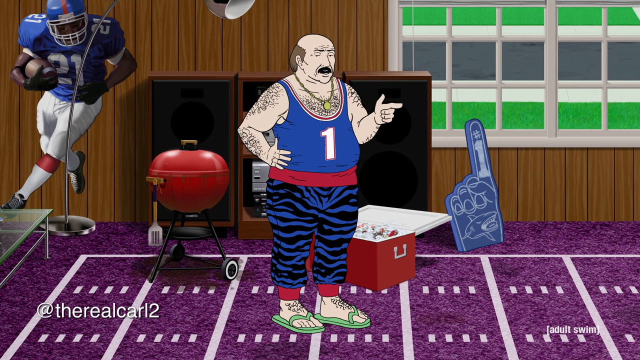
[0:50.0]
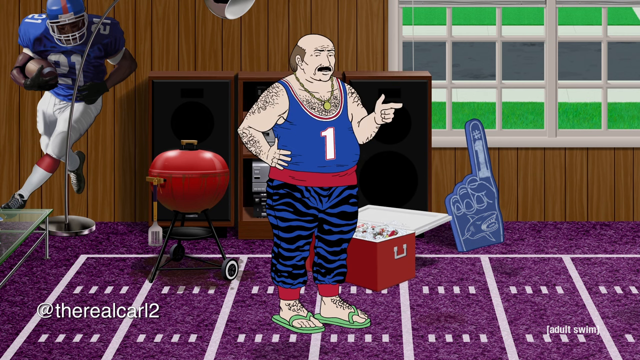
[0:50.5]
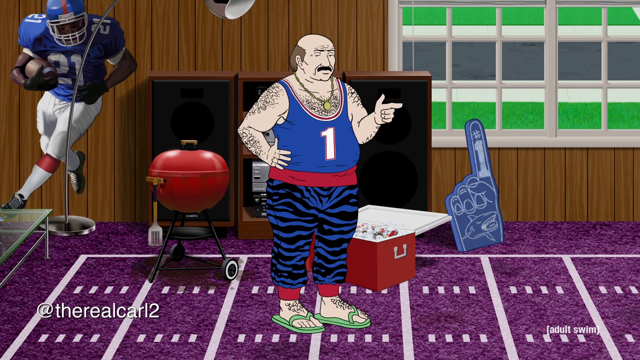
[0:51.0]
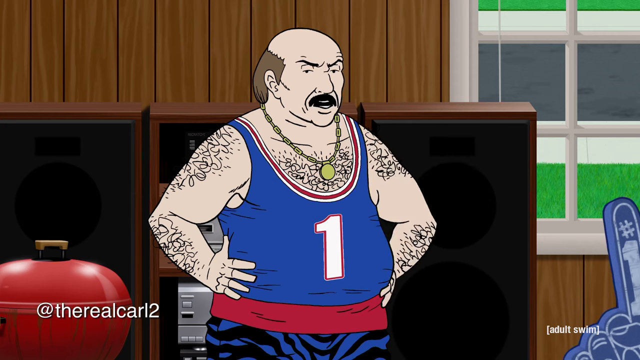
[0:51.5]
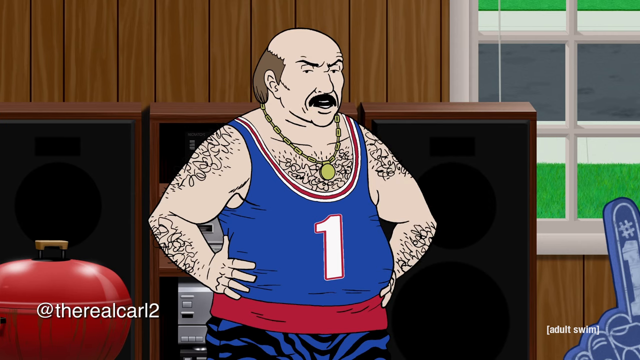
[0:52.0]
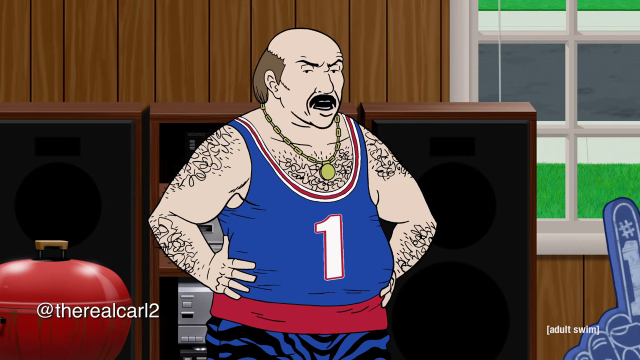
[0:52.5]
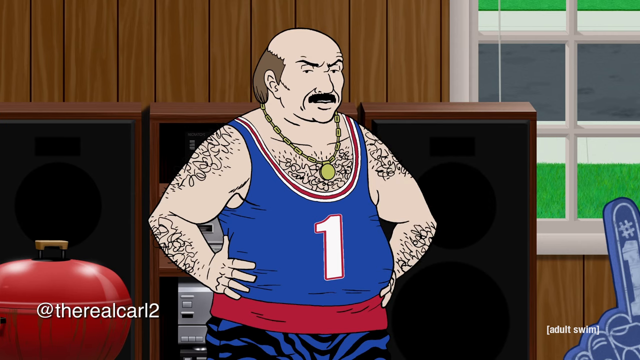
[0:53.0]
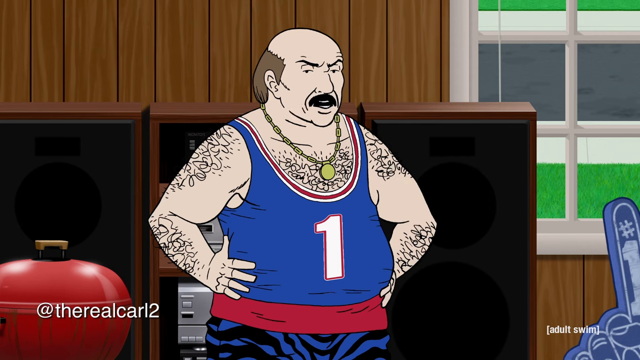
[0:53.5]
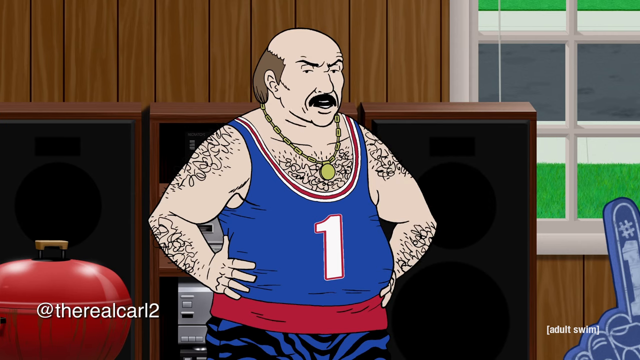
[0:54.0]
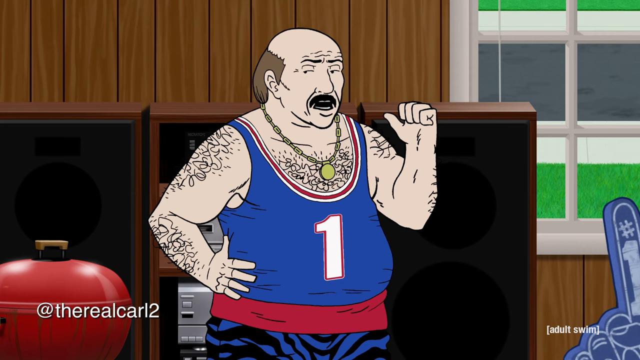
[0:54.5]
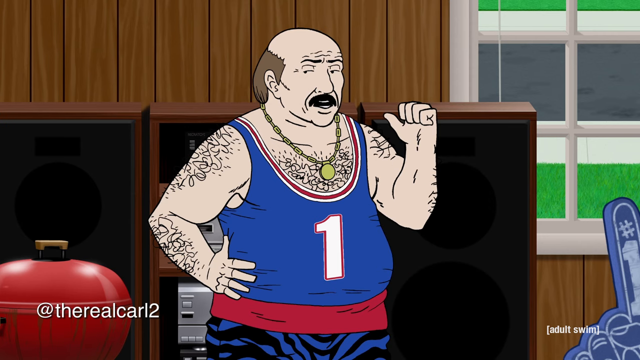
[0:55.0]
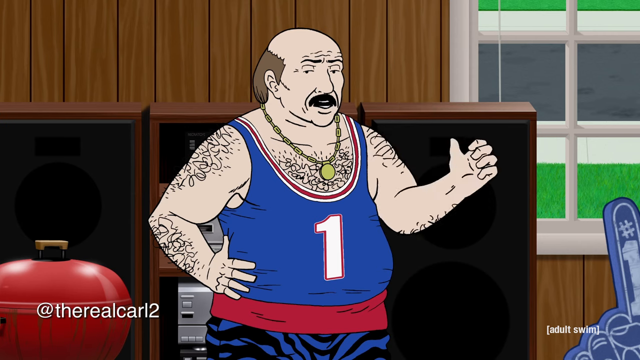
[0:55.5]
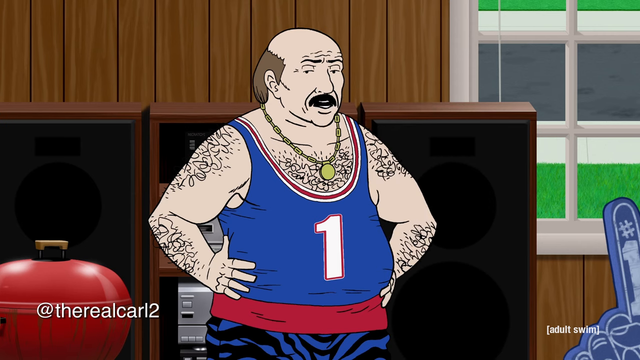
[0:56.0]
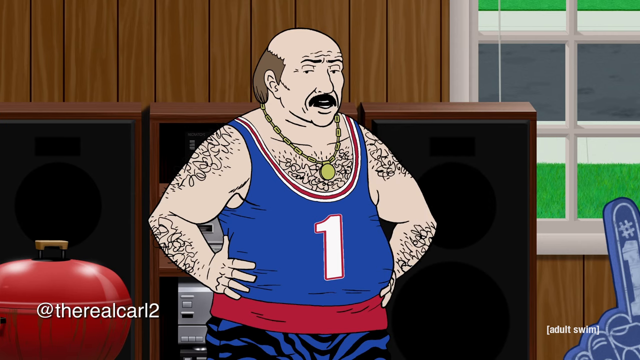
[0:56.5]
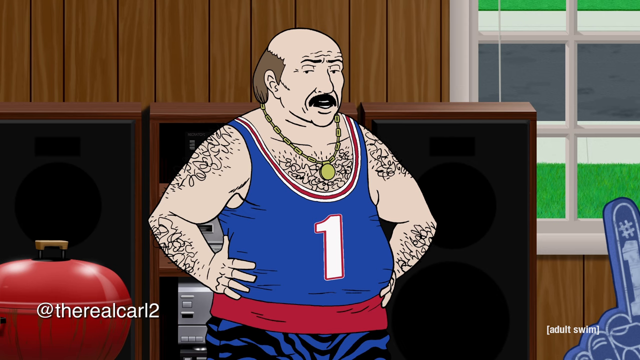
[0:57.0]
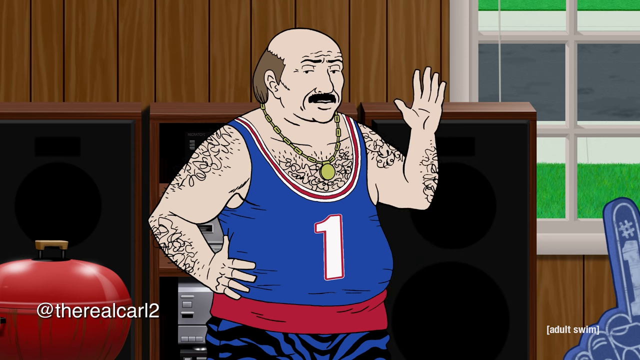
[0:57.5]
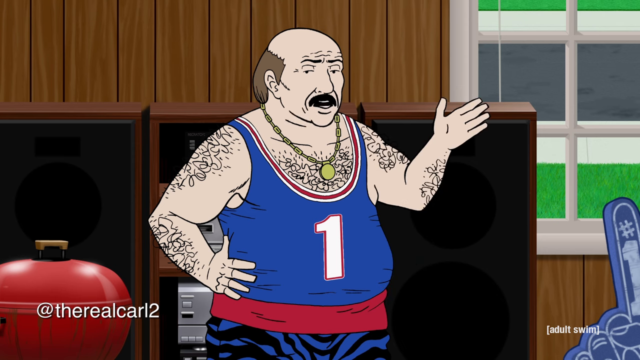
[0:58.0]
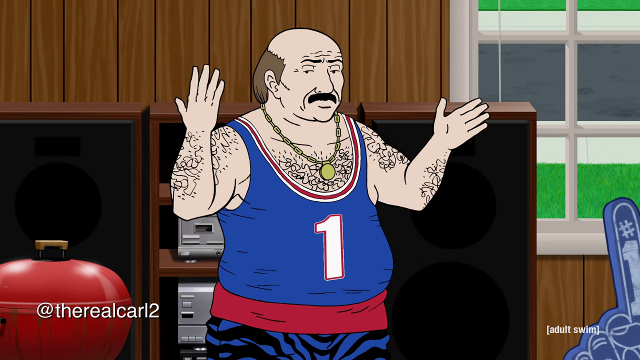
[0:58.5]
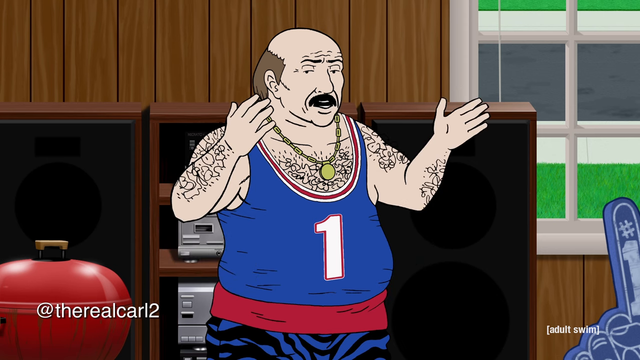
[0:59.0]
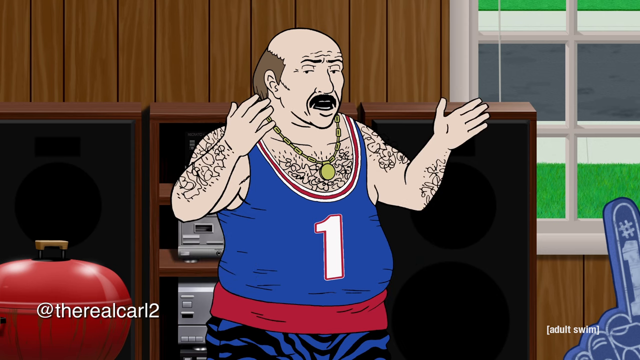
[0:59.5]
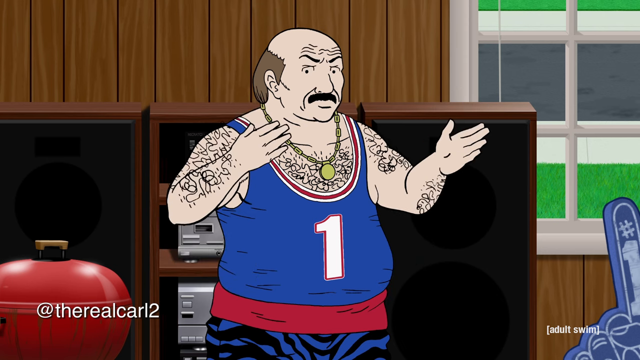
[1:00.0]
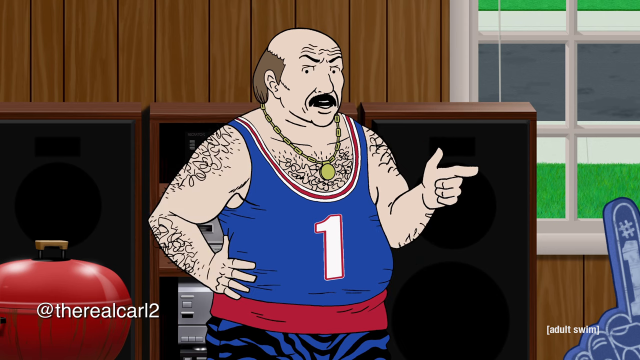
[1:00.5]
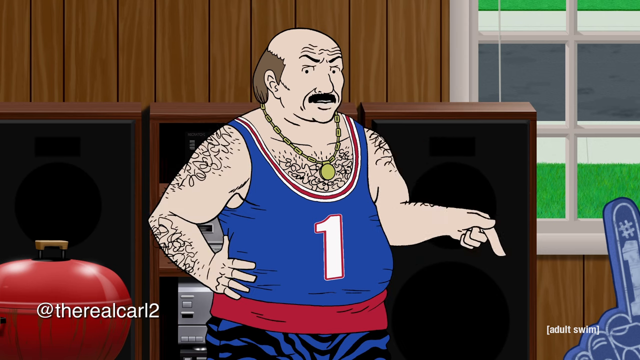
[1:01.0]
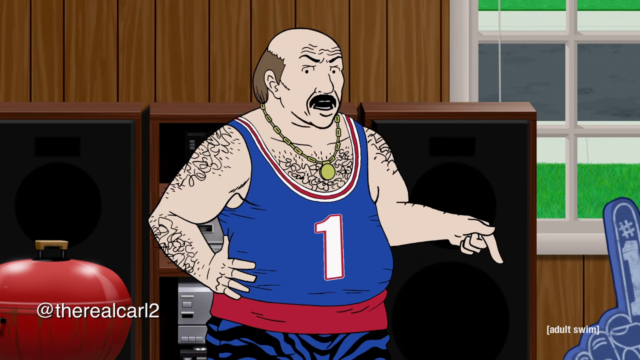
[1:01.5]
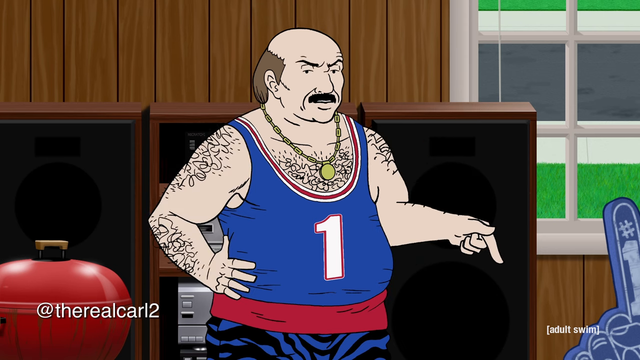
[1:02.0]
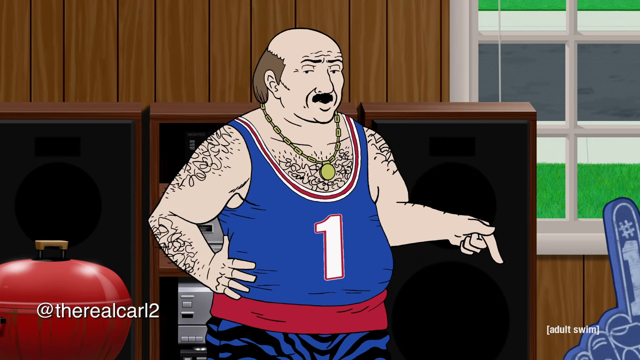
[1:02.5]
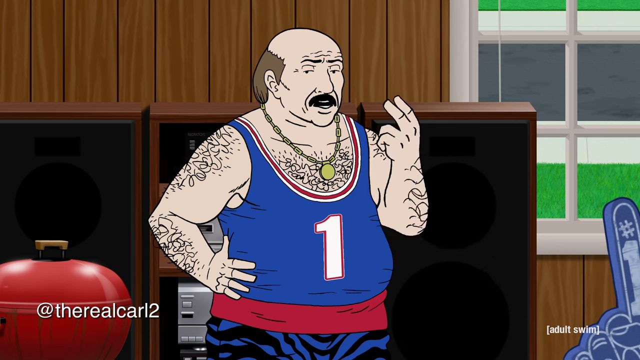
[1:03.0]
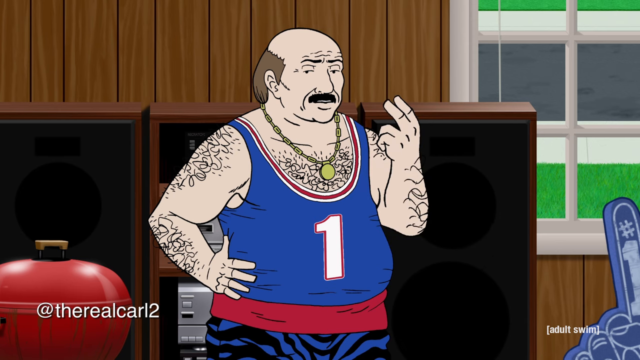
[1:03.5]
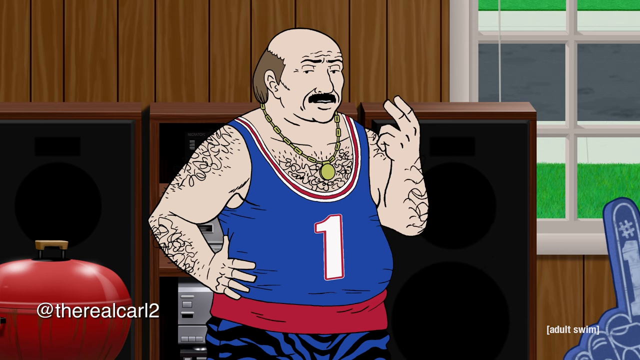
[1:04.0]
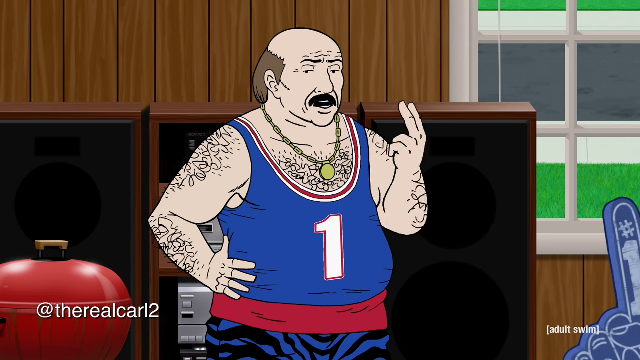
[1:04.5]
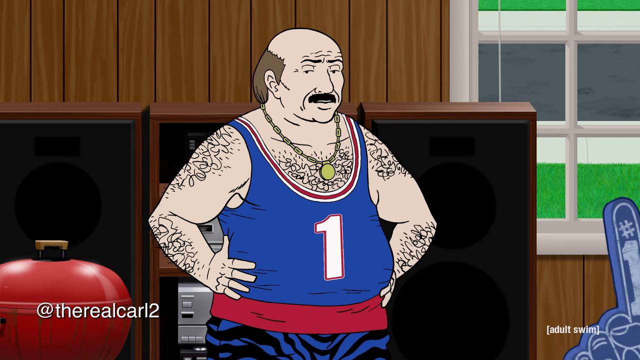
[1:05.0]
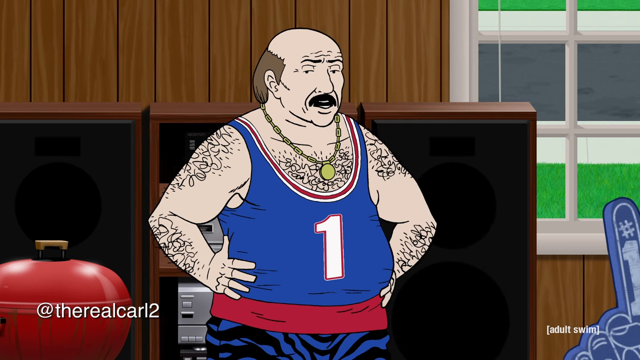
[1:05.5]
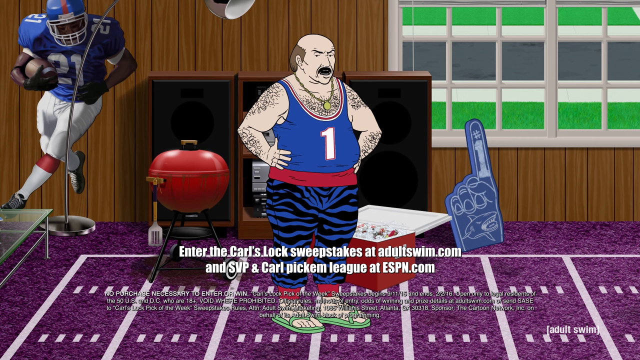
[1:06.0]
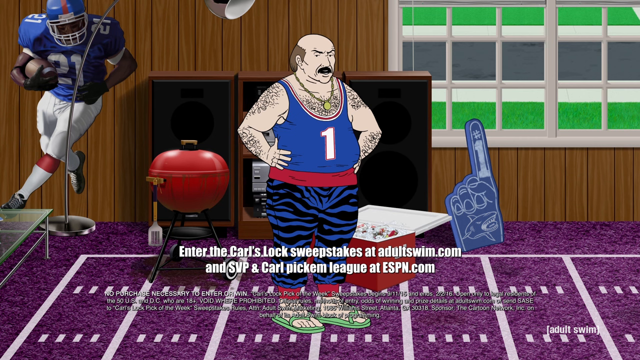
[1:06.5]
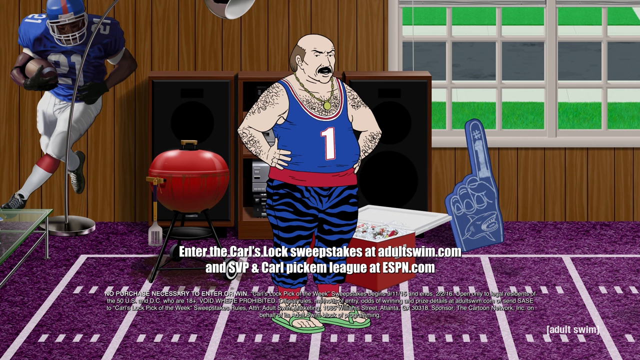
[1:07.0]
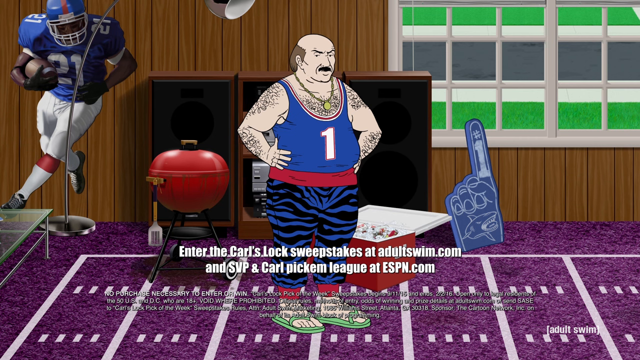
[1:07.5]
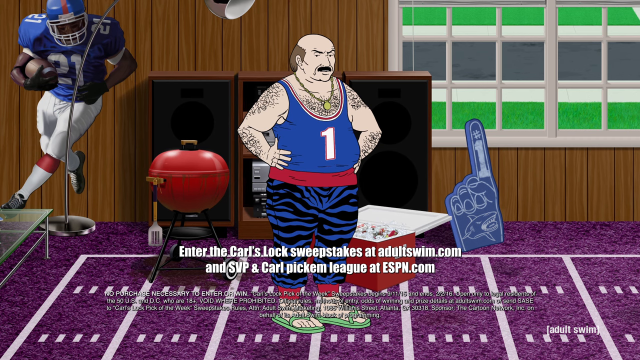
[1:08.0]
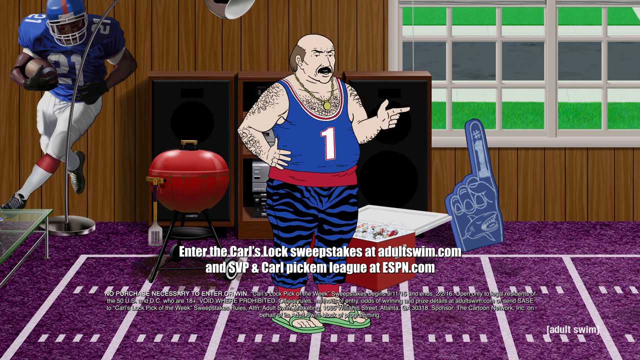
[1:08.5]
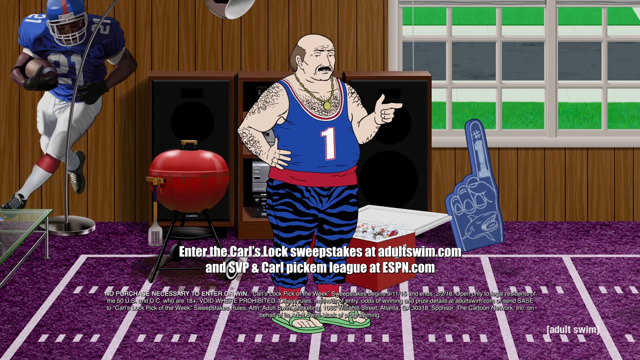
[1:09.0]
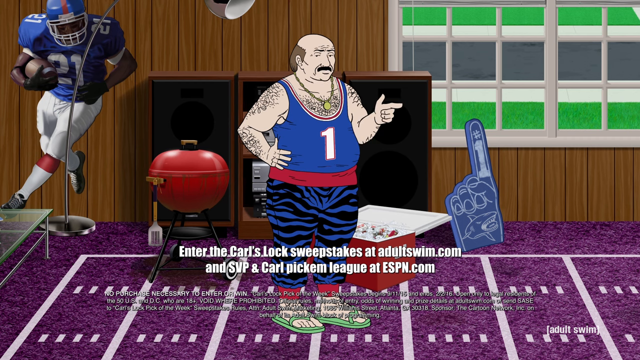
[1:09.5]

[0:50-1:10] The same man stands in the middle of his animated living room, which has purple carpet designed to look like a football field. A cutout of a number 21 football player is on the wall behind him, along with a cooler of beer and a barbecue grill. His expression is very serious, with lines on his forehead and his eyebrows drawn together, and he points confidently.